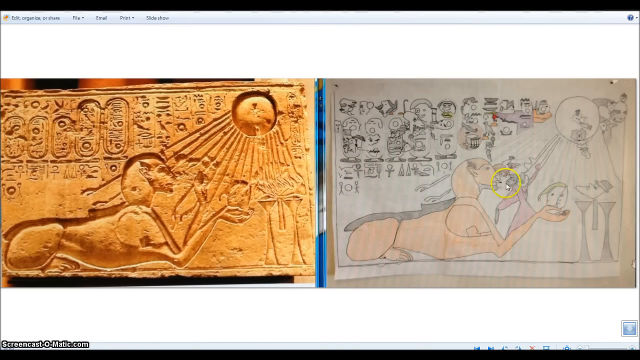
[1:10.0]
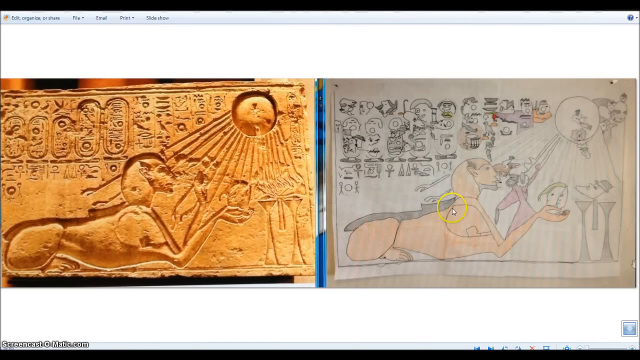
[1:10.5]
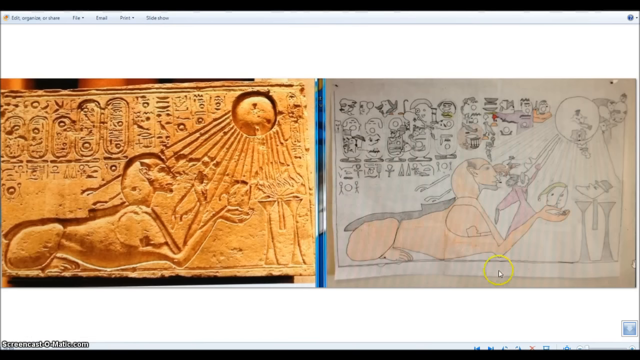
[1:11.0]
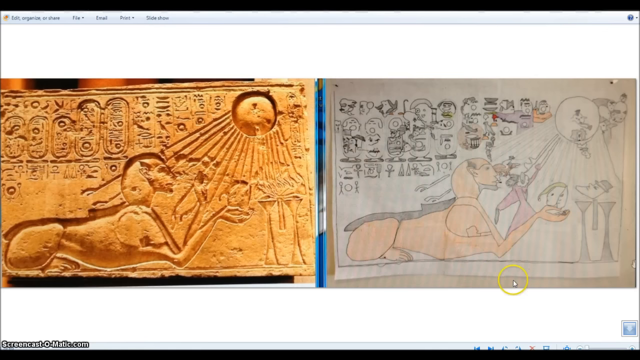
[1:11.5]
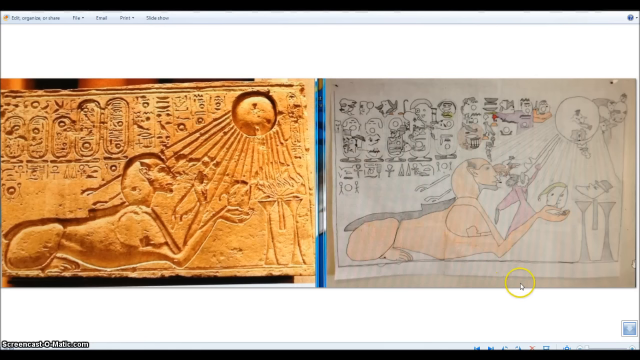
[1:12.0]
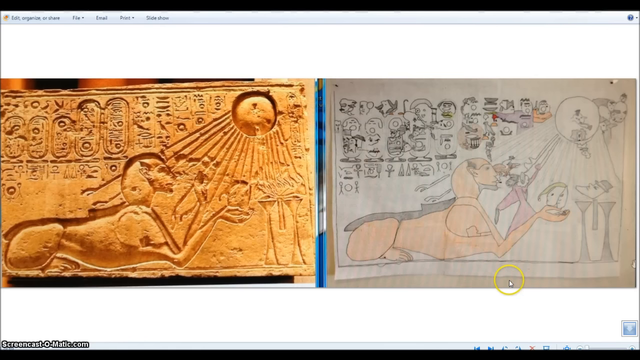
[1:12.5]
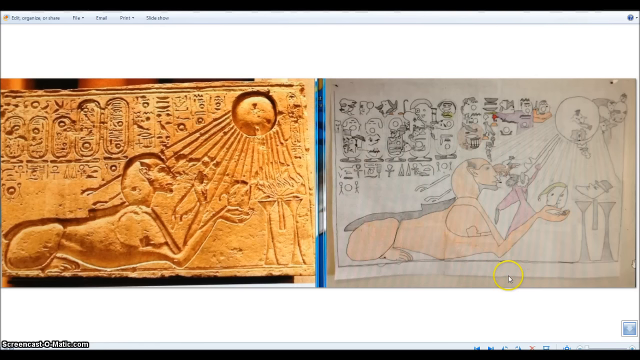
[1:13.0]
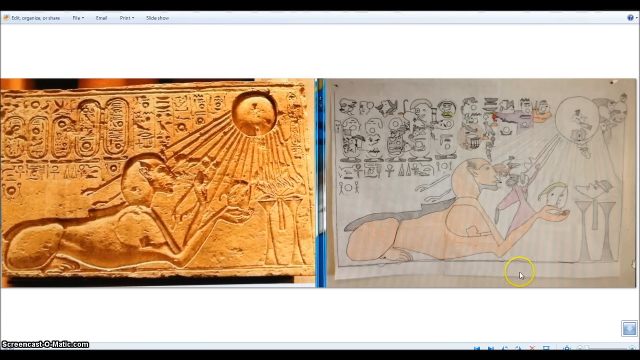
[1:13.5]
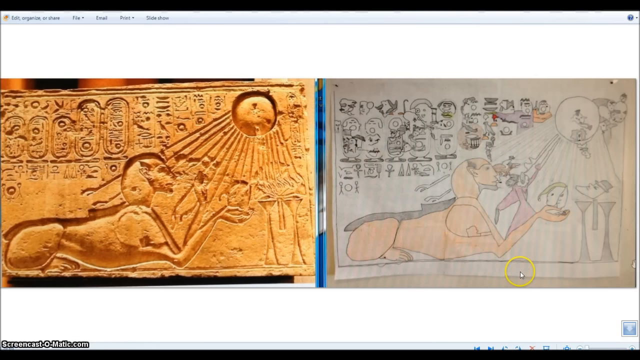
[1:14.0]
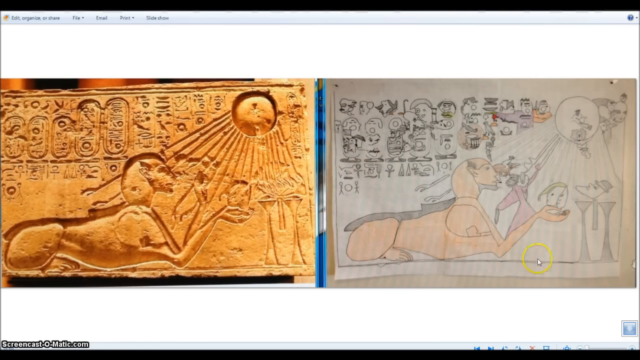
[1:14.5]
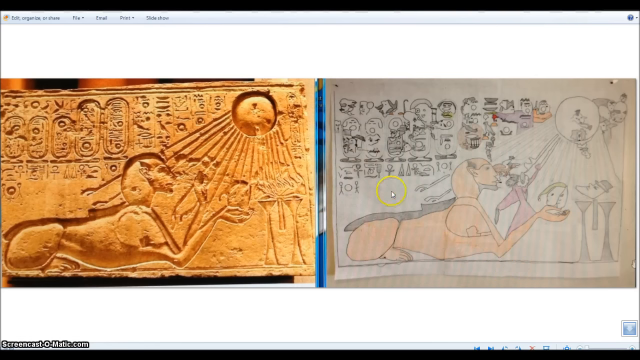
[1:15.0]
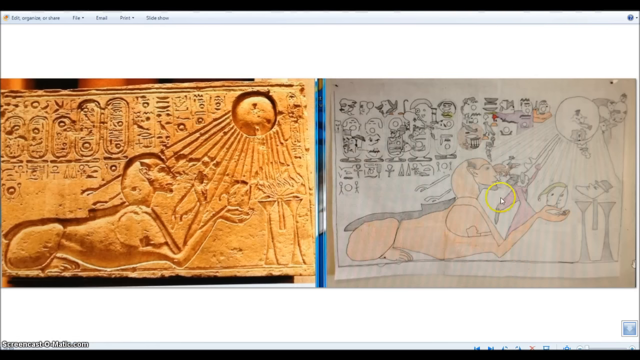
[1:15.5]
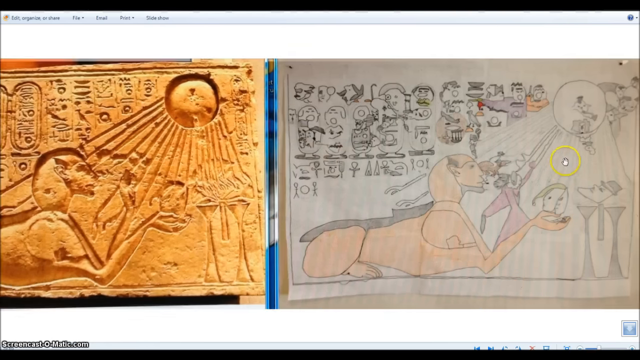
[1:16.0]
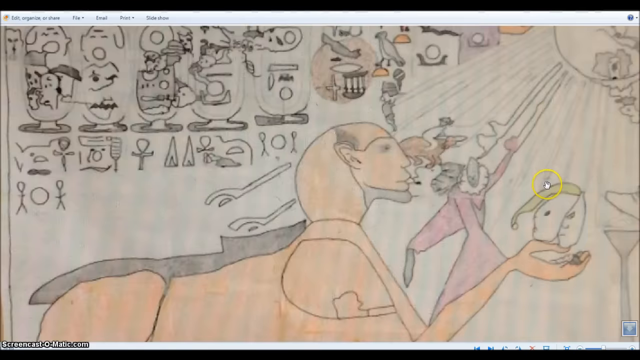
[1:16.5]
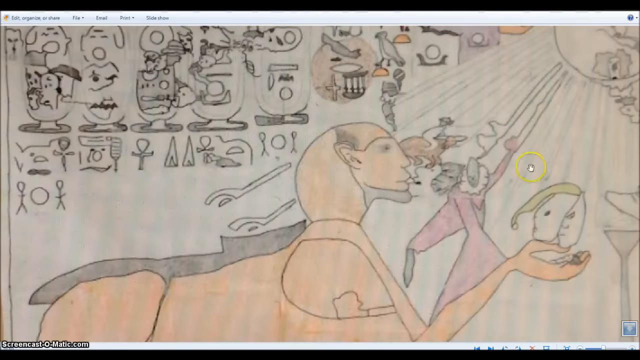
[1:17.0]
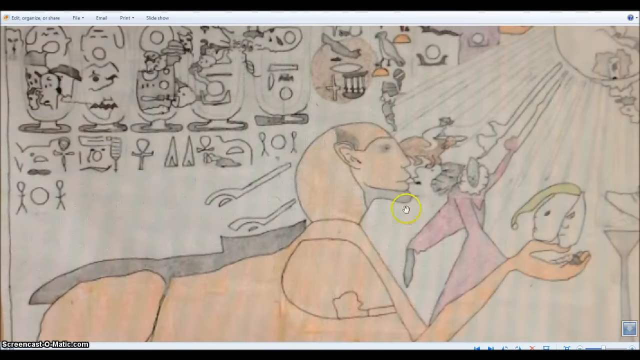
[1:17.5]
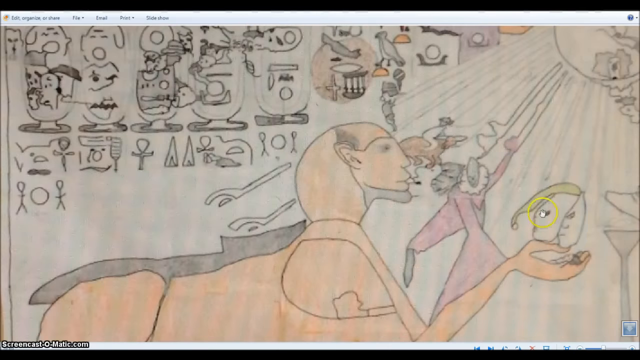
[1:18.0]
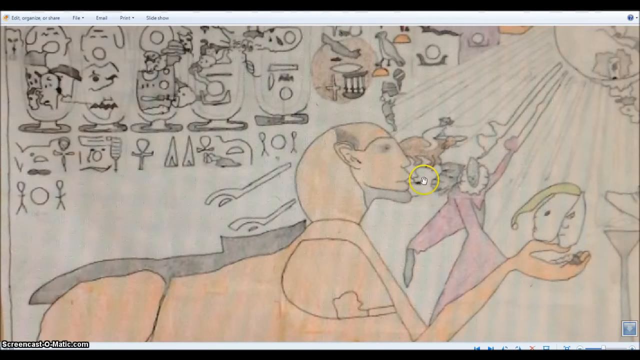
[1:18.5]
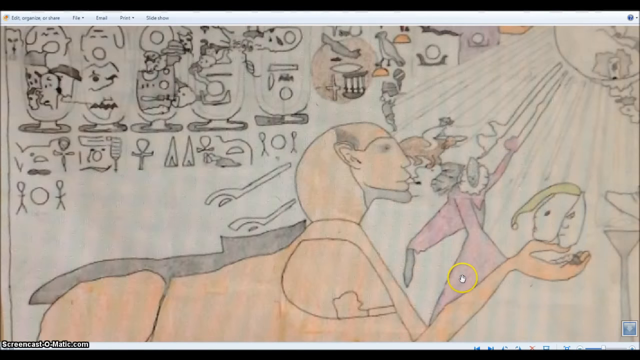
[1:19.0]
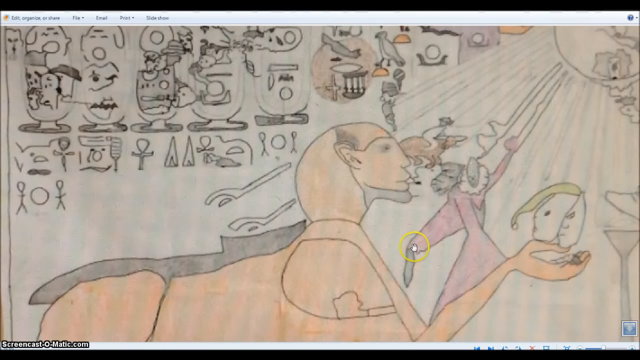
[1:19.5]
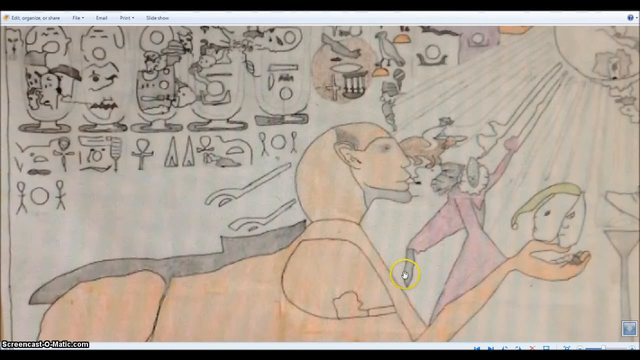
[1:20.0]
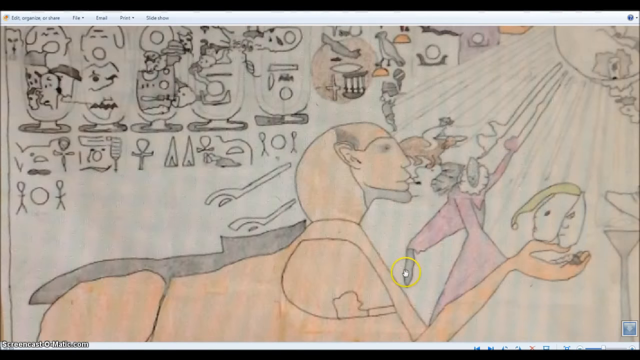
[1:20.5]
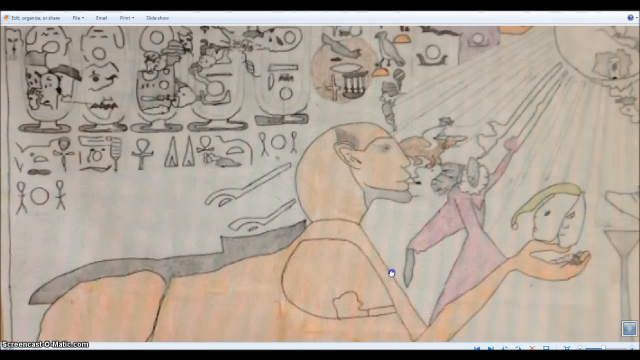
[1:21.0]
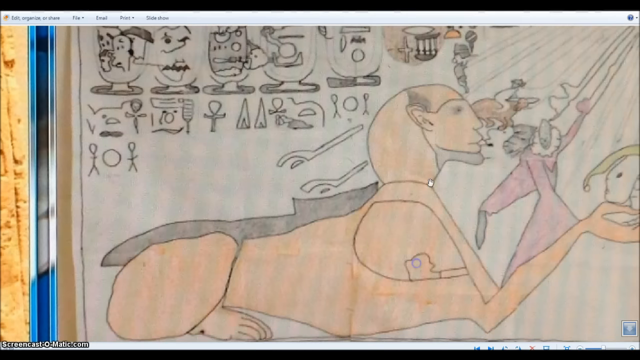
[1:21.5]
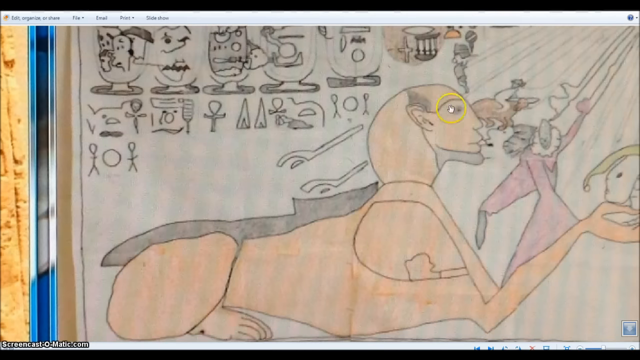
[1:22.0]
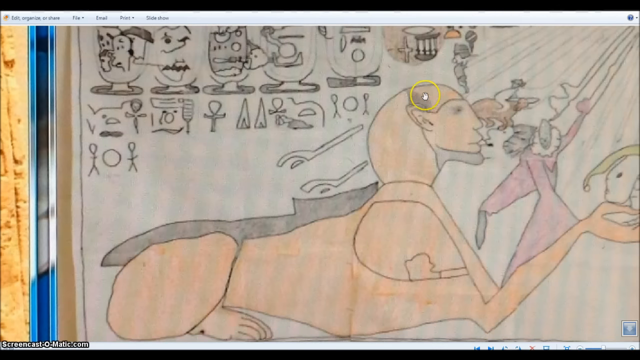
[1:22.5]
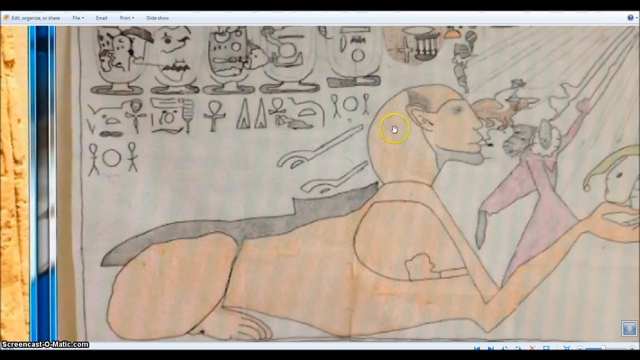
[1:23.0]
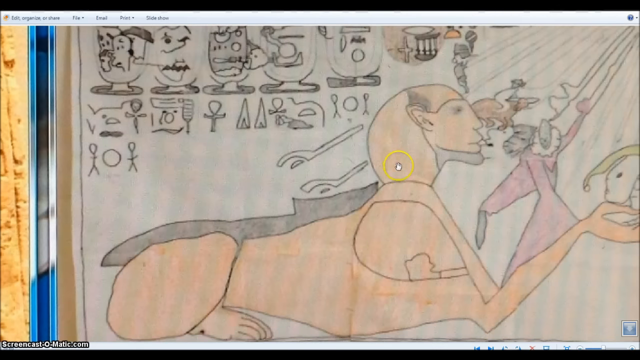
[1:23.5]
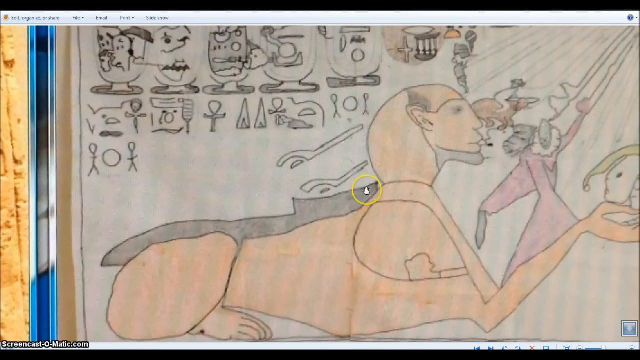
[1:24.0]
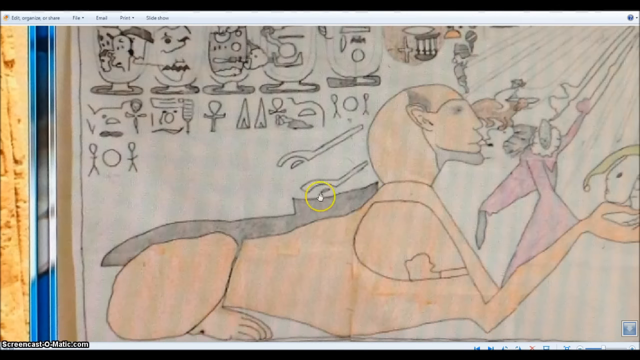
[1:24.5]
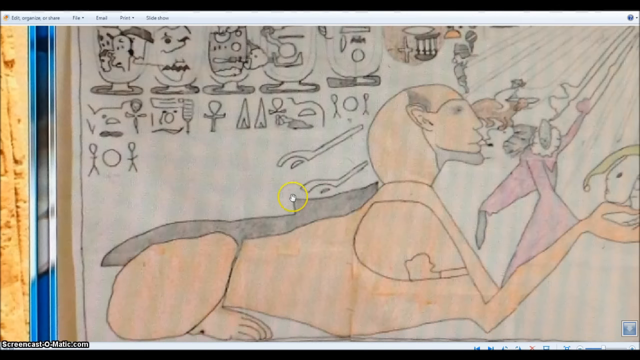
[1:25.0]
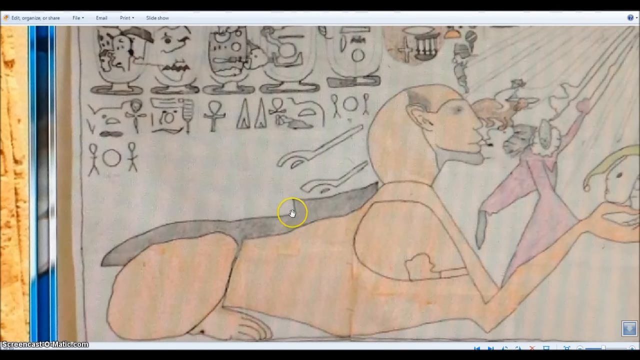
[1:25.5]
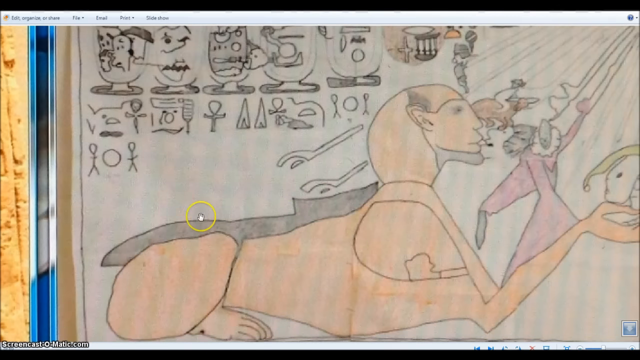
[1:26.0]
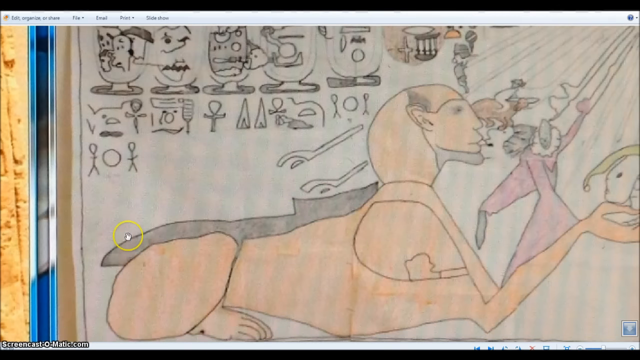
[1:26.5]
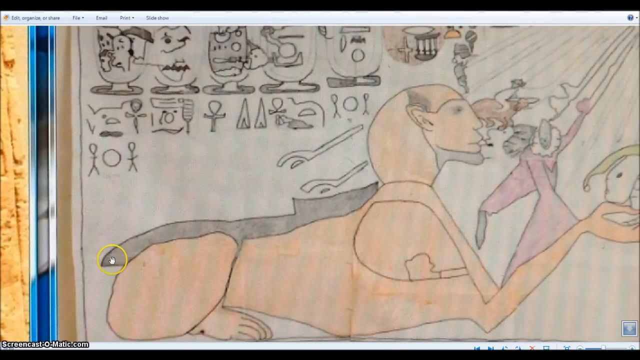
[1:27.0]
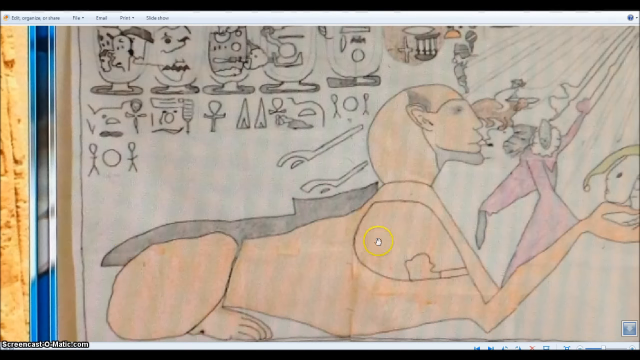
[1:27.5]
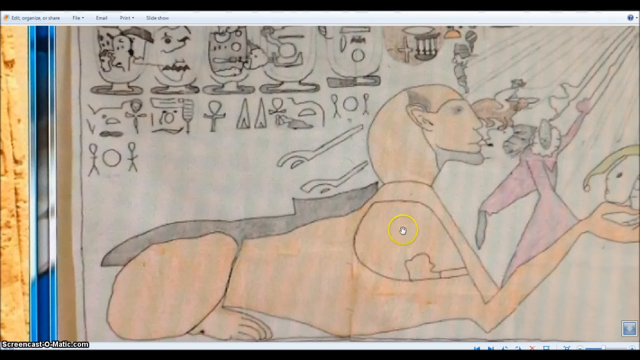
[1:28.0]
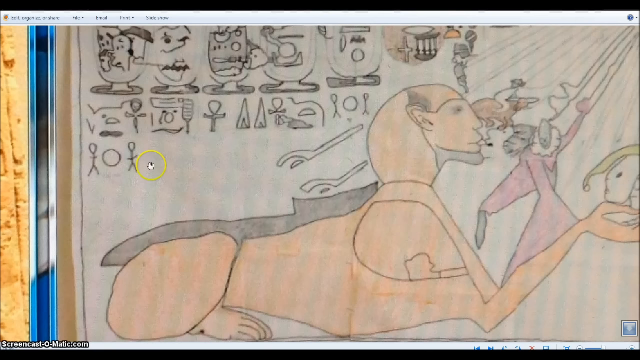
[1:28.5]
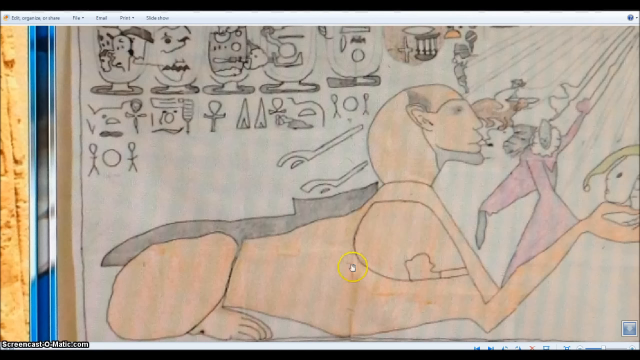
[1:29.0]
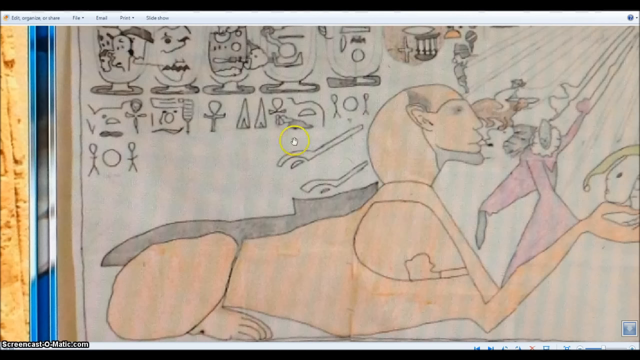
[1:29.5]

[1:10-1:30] The drawings on paper appear again. The view zooms in and the cursor with its circle moves over different parts of an animal, up and down and around the drawing, including the tail and the head. The drawing, of an ancient Egyptian drawing, apparently was made by a baby or a kid on paper. Only the cursor moves around the objects.